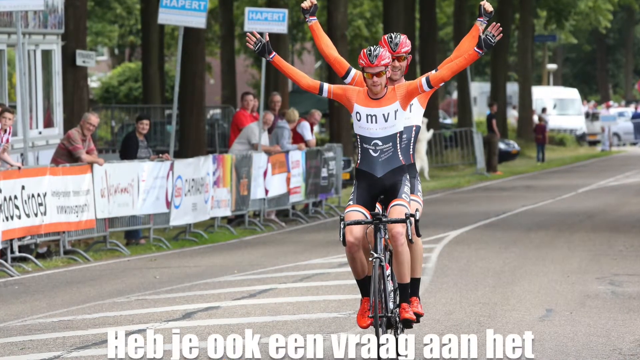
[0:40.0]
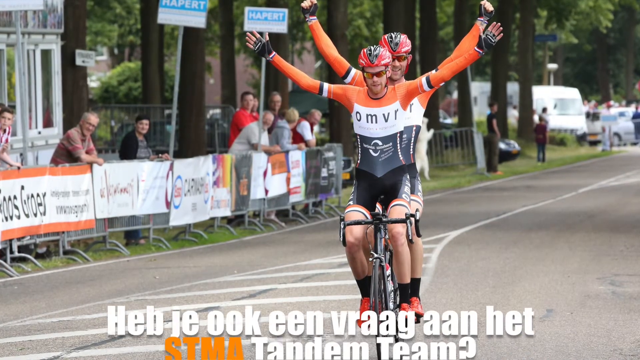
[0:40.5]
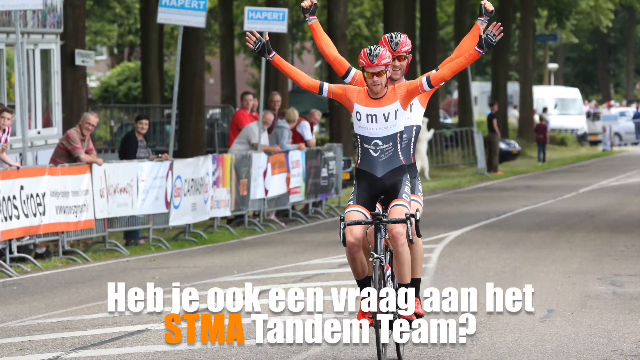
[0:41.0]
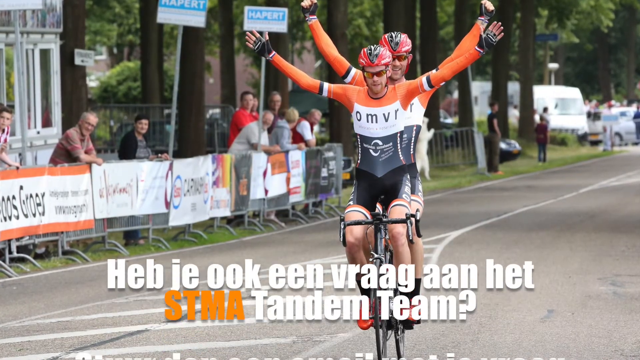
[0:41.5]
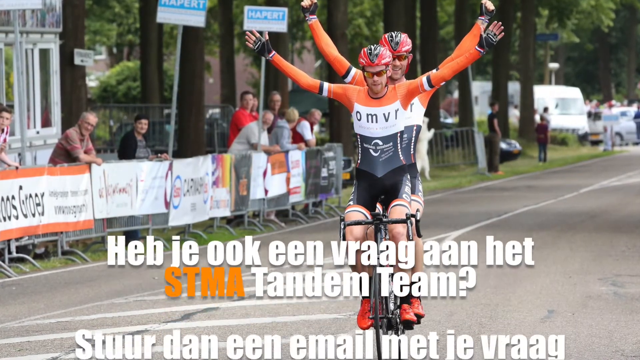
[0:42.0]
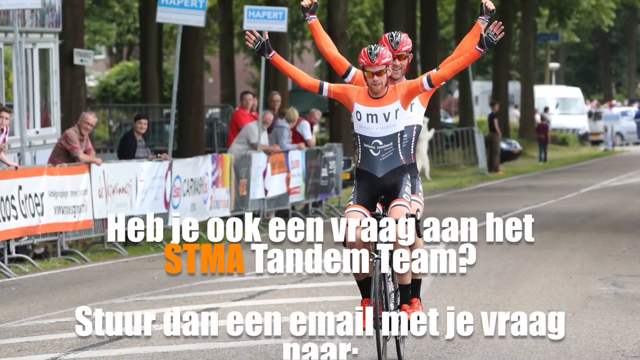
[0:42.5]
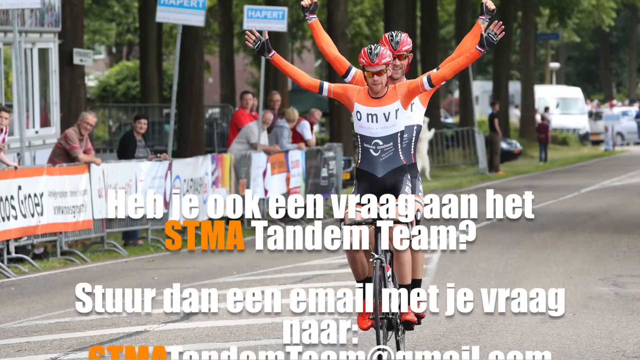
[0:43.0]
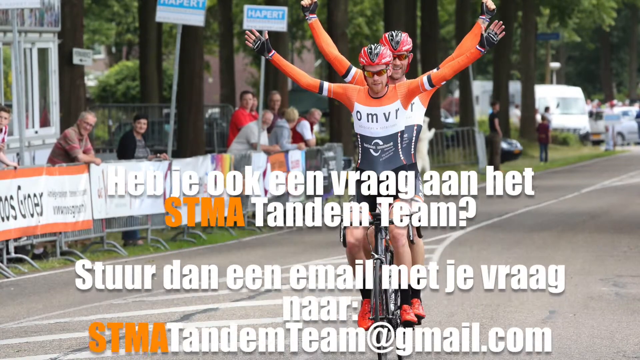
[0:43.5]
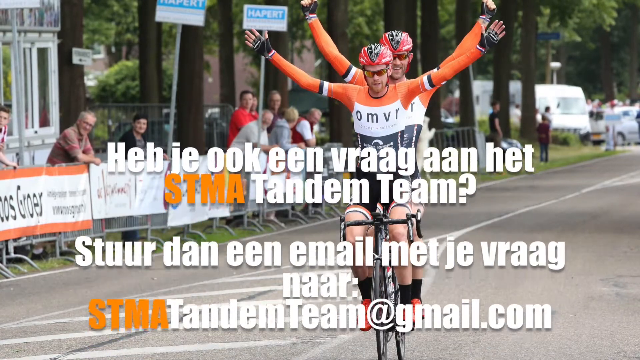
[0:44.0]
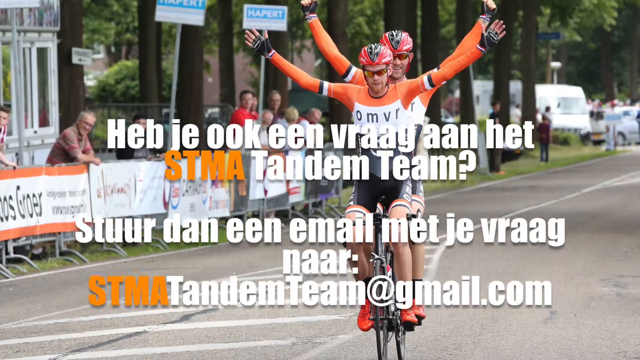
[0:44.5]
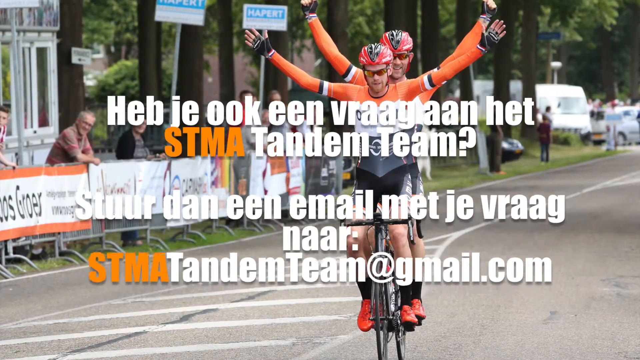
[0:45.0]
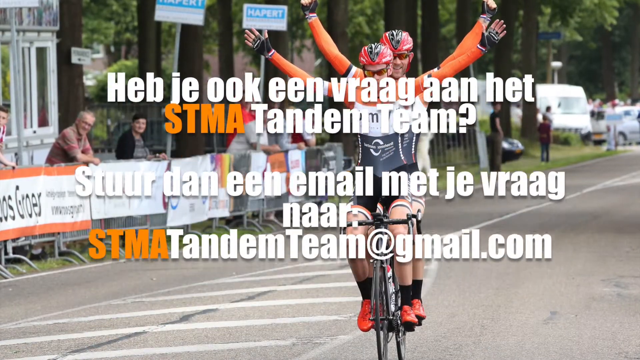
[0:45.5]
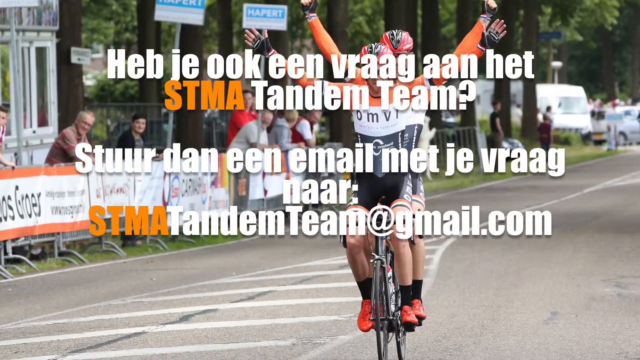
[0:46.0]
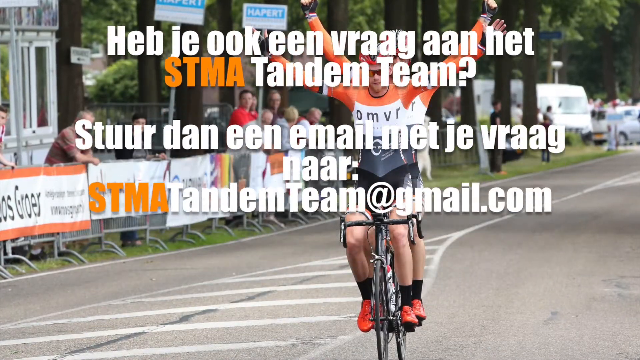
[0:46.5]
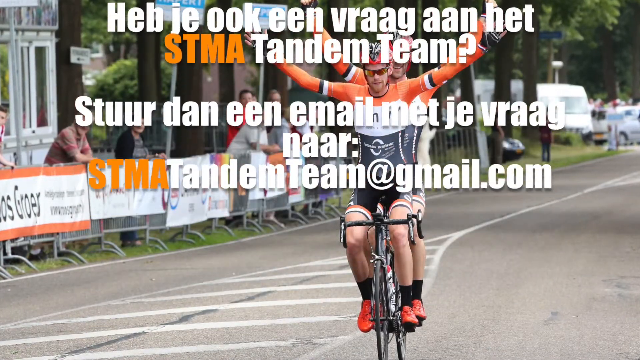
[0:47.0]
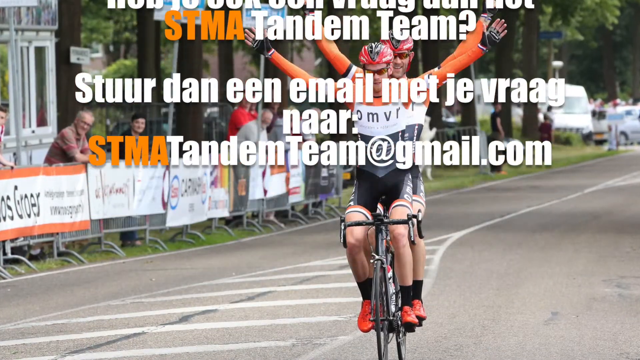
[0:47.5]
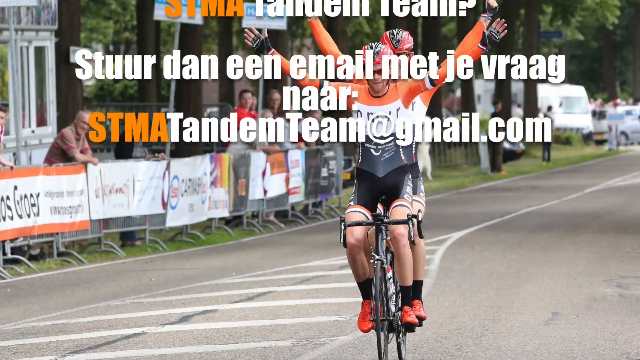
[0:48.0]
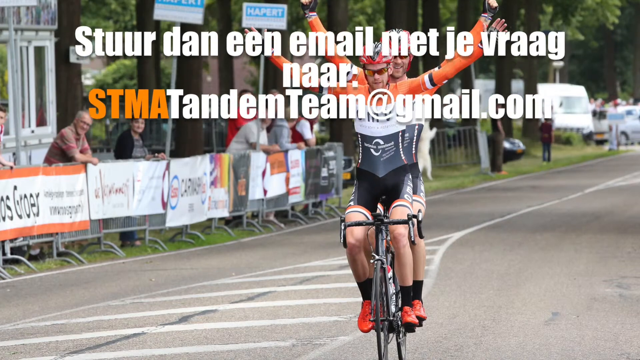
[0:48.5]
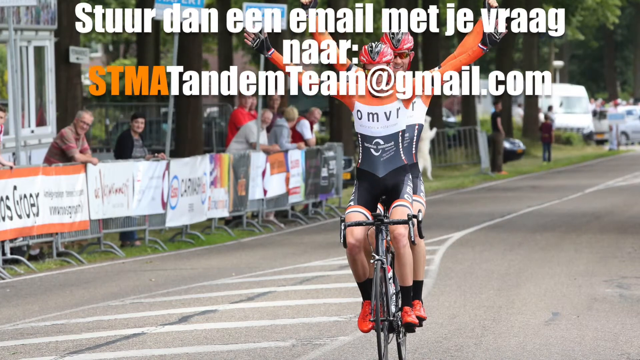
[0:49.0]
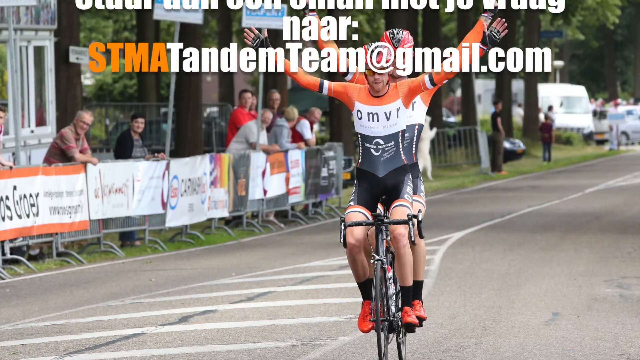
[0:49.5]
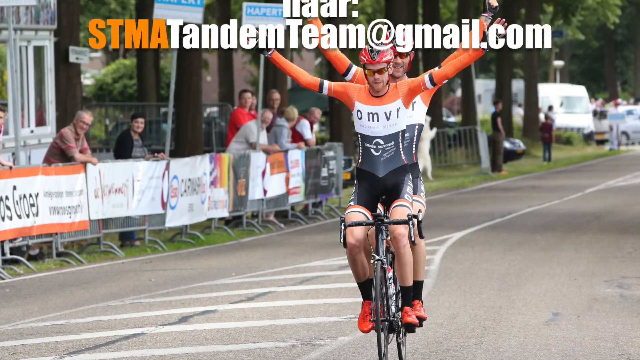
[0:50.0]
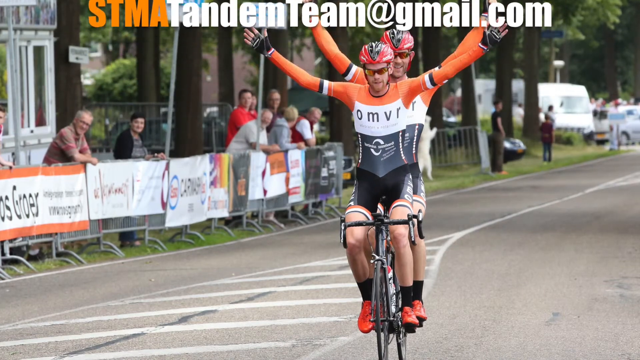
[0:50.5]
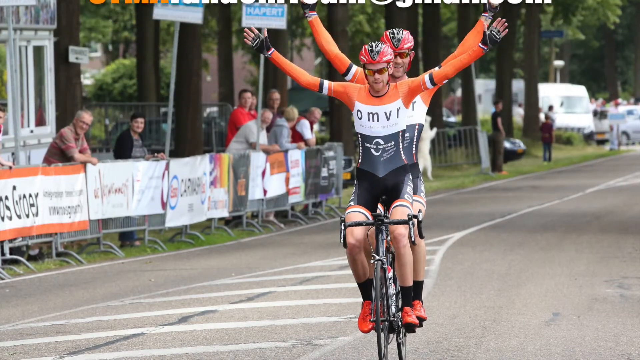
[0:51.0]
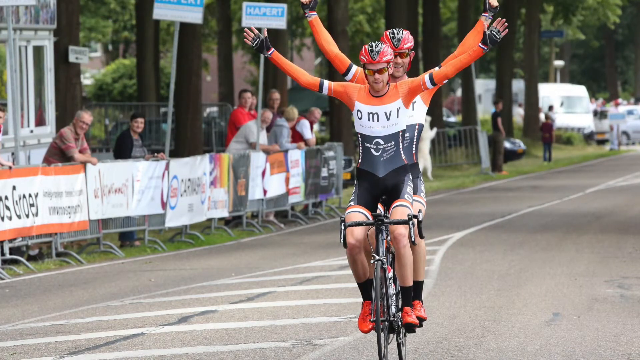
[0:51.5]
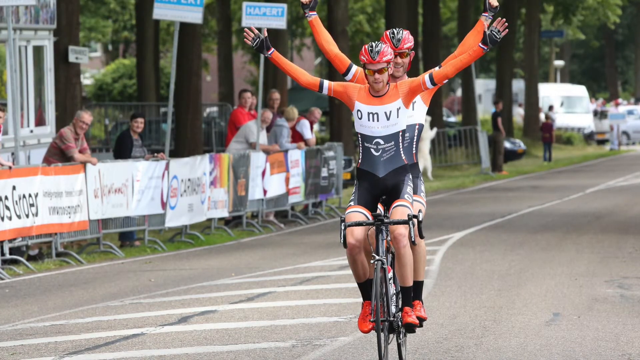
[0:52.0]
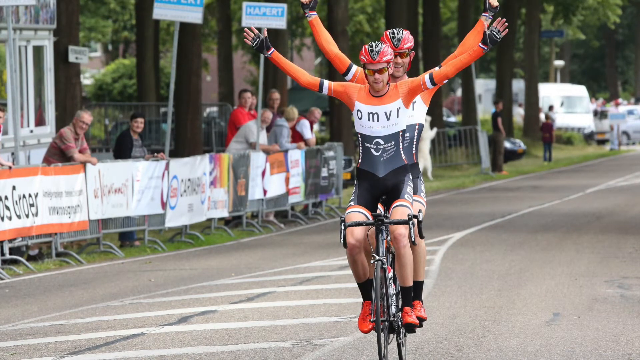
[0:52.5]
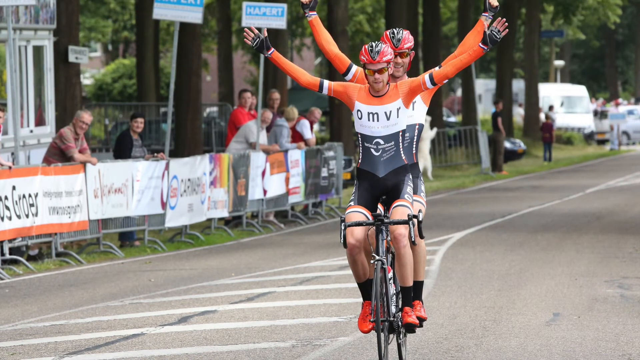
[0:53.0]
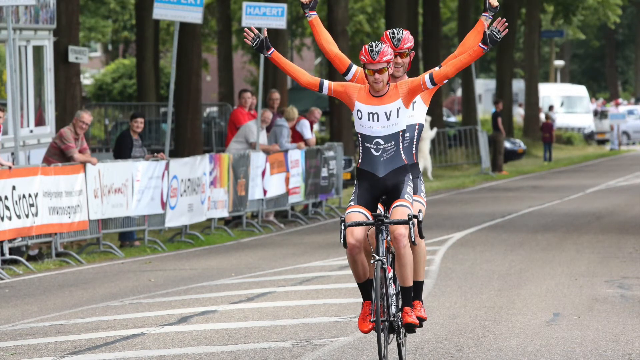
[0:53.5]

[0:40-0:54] The two victorious cyclists are one in front of the other, so closely stacked that only one bike is visible, though there are probably two. Both have their arms raised up beside them in a victory formation and are smiling. They wear black and red cycling helmets, uniforms in orange, white and black, shorts in black, orange and white, black socks and red shoes. People lean on barricades to the left, maybe a dozen or so.